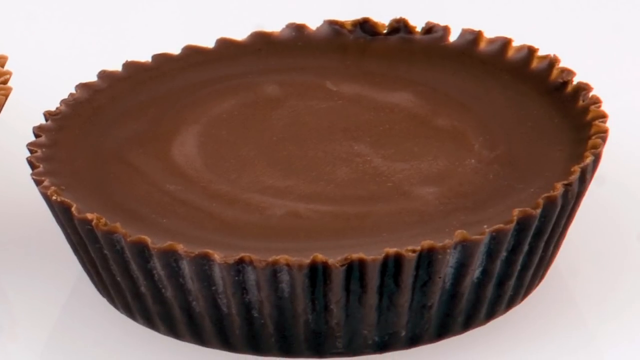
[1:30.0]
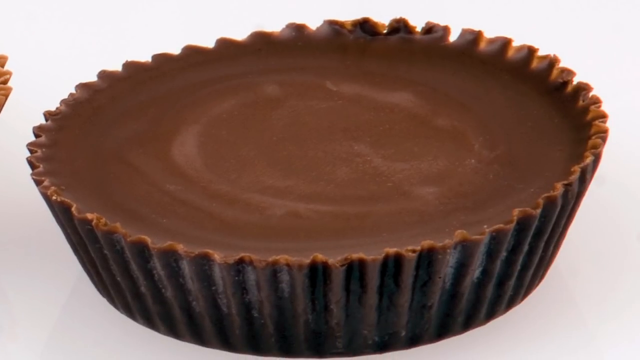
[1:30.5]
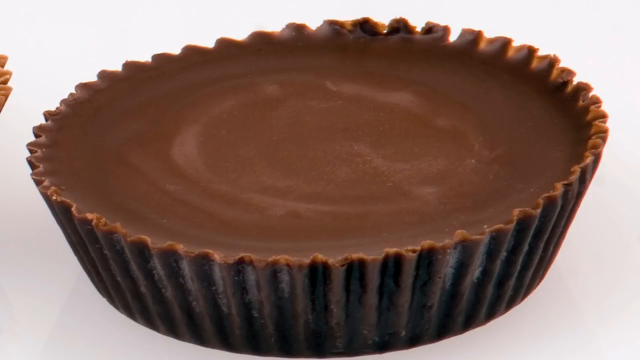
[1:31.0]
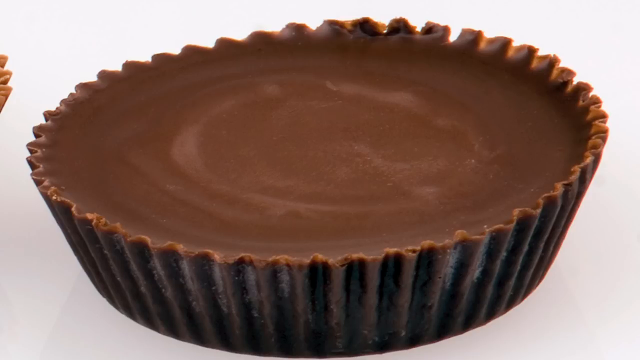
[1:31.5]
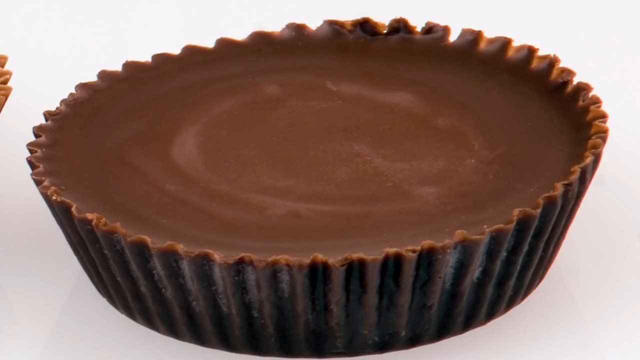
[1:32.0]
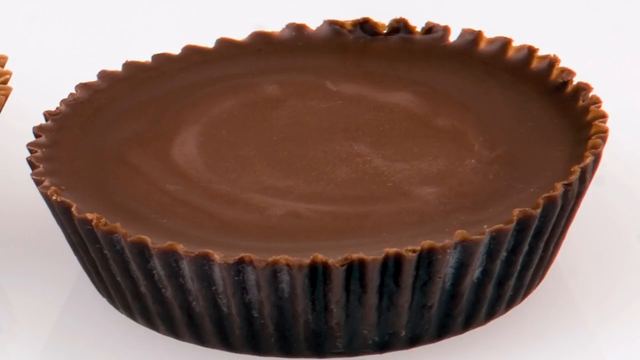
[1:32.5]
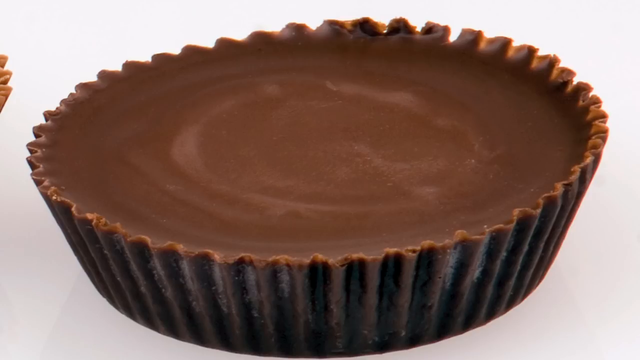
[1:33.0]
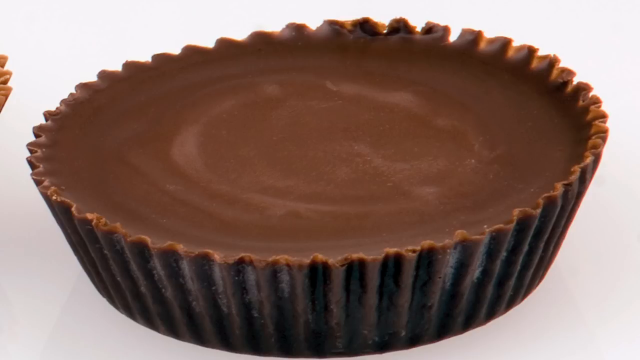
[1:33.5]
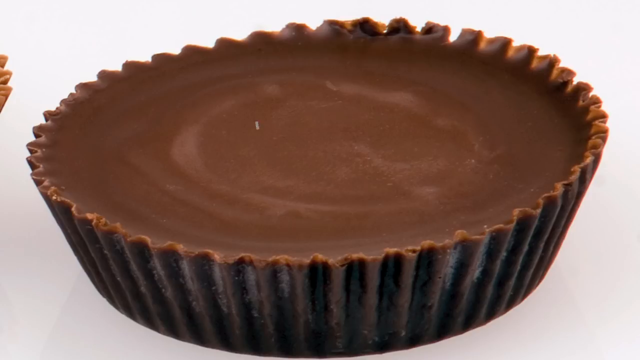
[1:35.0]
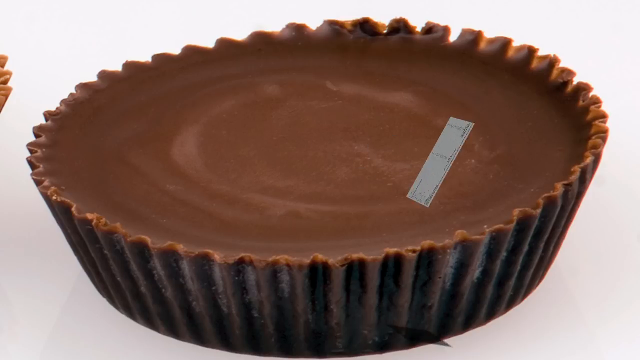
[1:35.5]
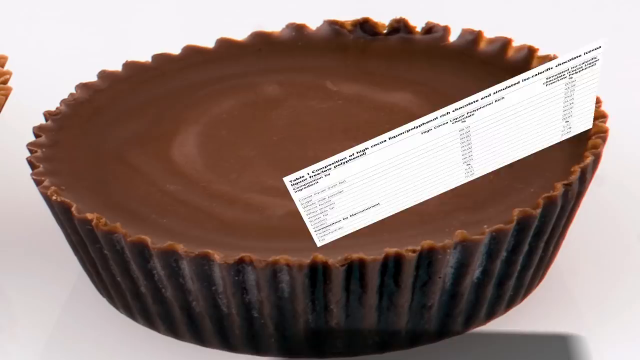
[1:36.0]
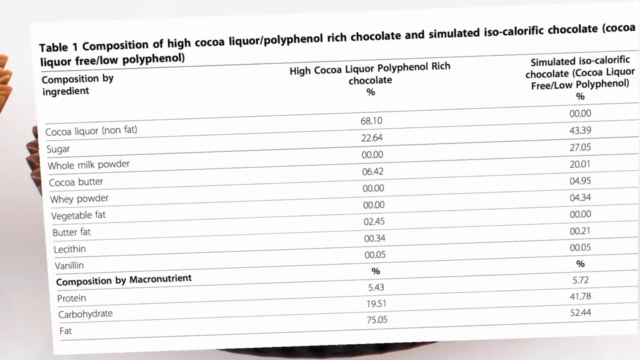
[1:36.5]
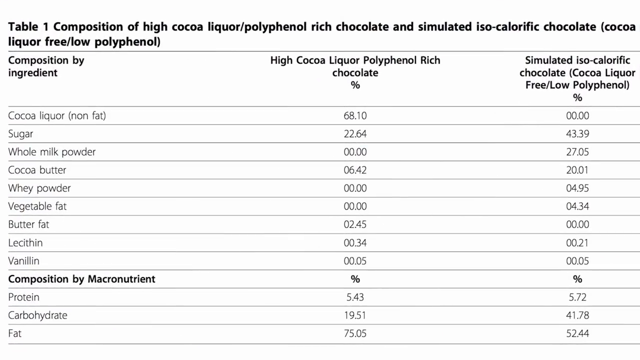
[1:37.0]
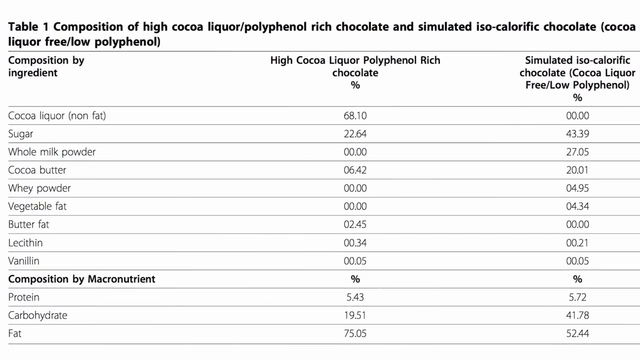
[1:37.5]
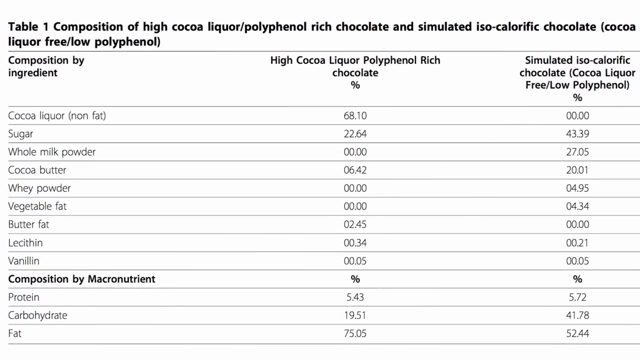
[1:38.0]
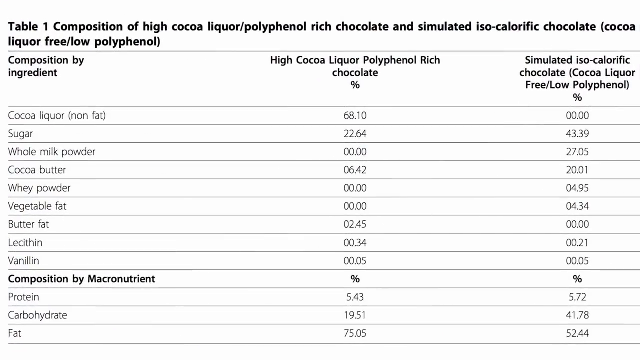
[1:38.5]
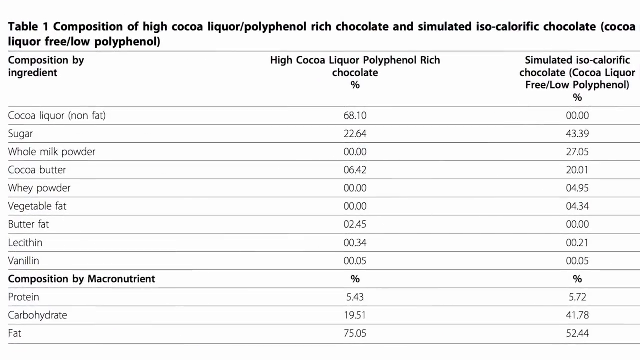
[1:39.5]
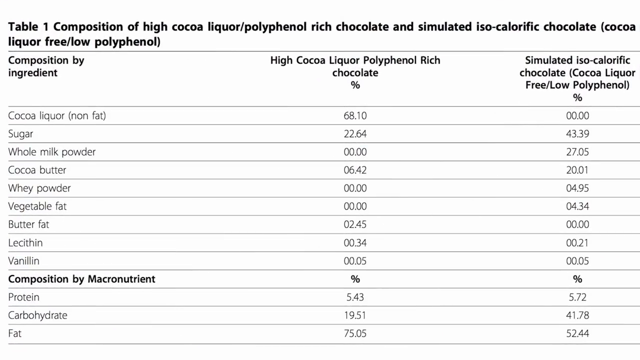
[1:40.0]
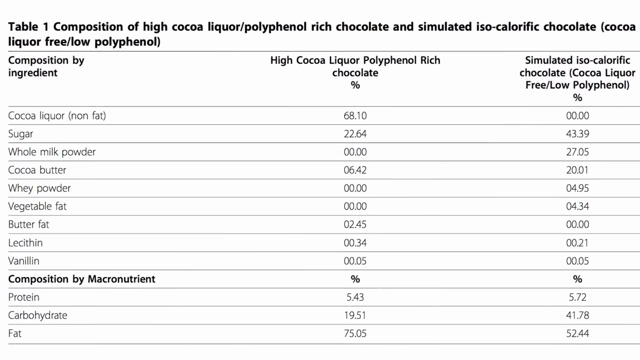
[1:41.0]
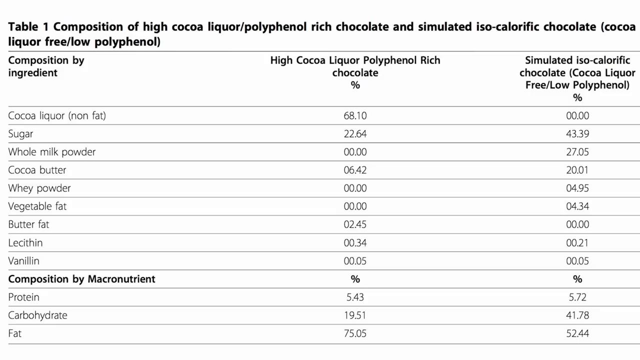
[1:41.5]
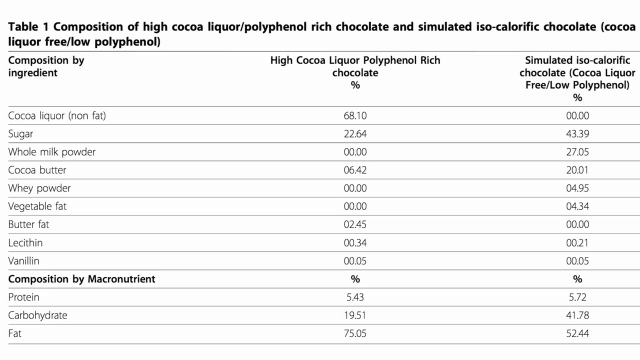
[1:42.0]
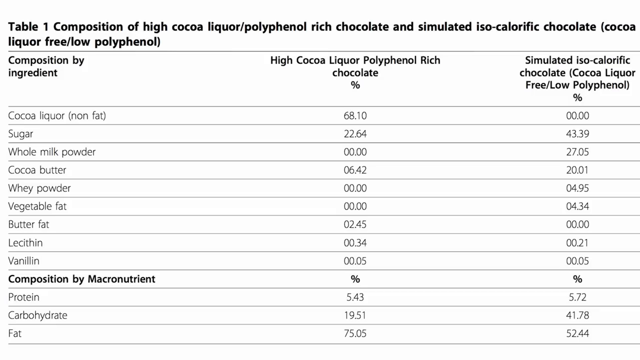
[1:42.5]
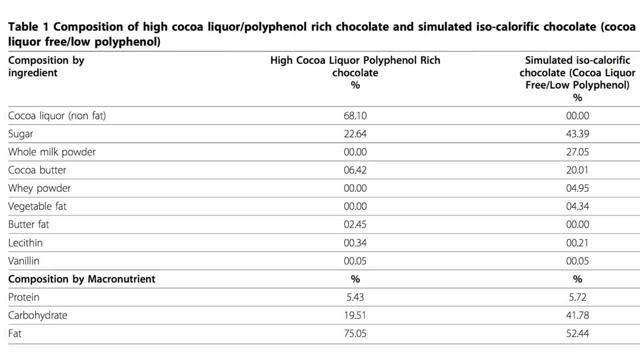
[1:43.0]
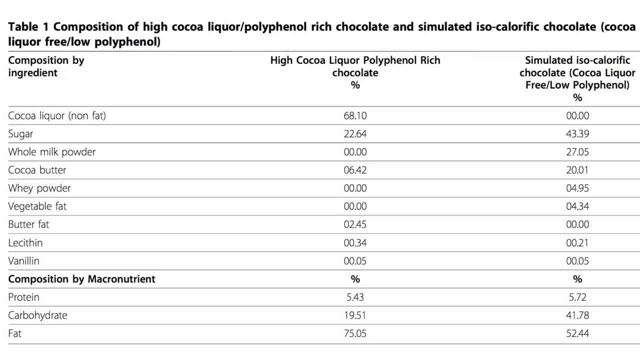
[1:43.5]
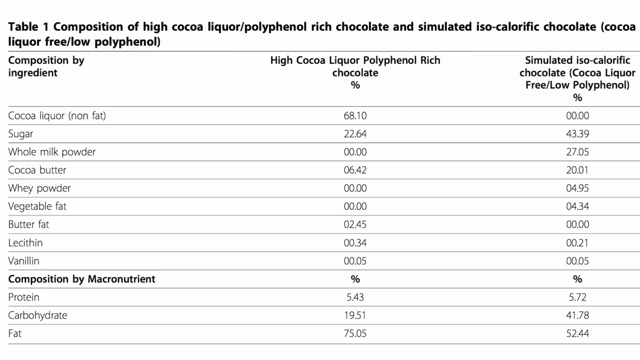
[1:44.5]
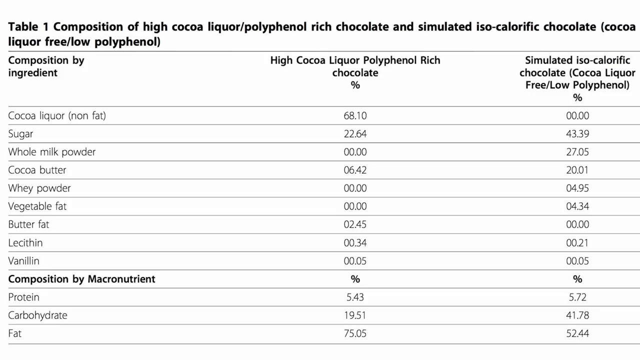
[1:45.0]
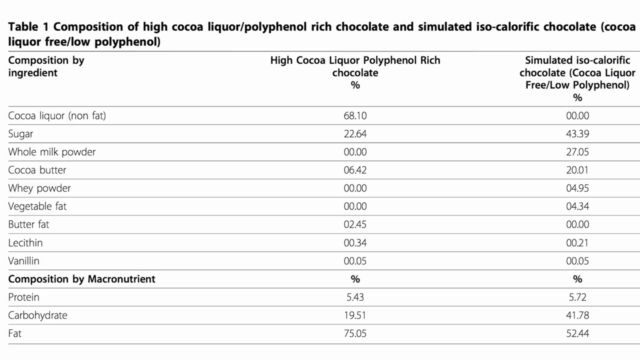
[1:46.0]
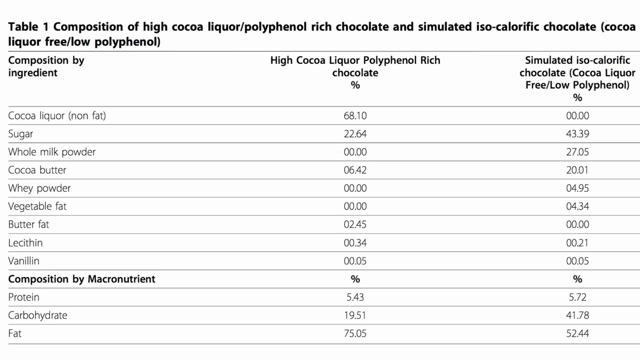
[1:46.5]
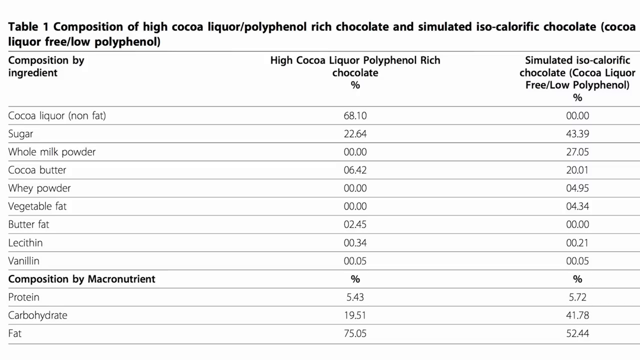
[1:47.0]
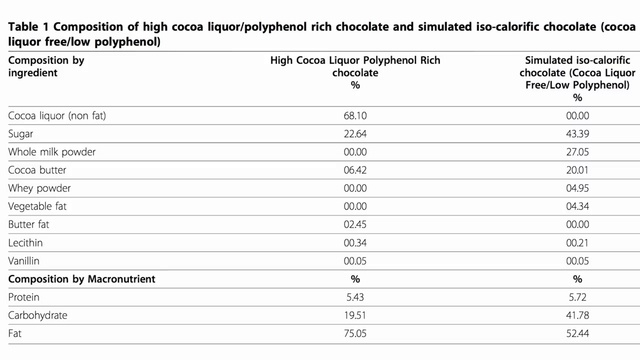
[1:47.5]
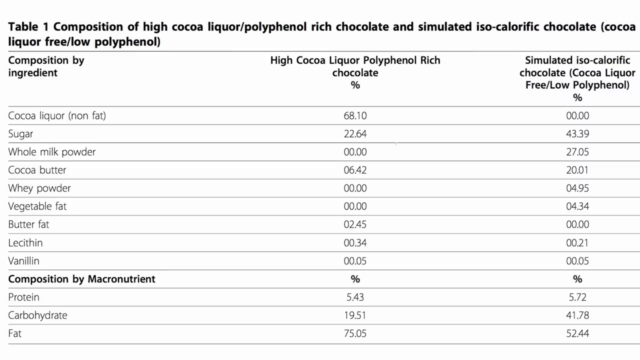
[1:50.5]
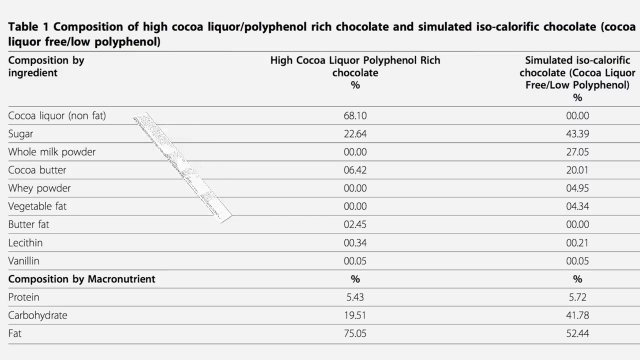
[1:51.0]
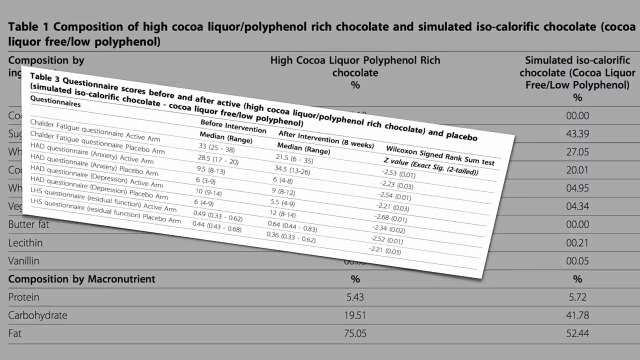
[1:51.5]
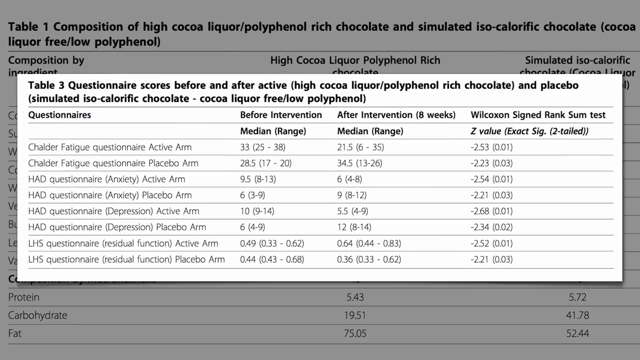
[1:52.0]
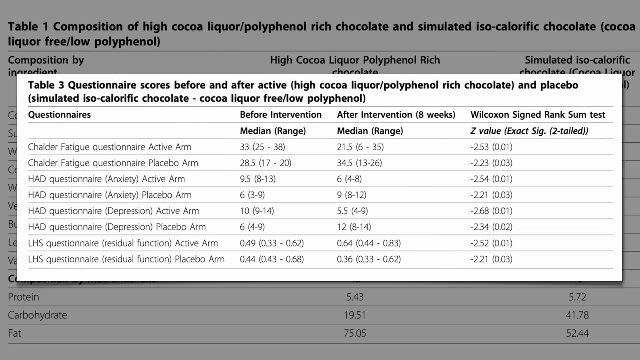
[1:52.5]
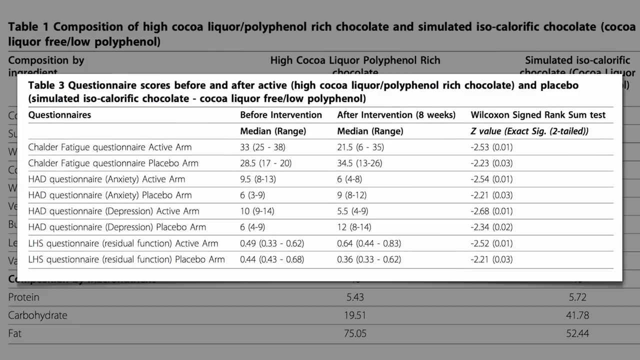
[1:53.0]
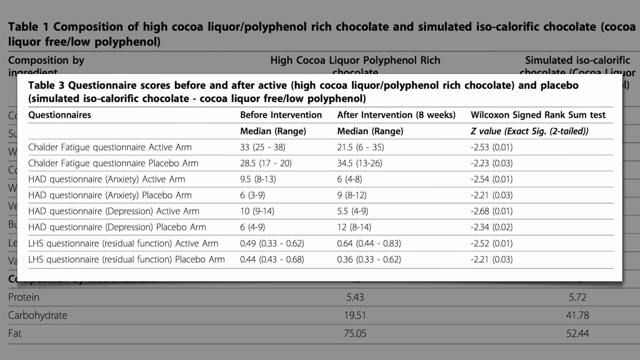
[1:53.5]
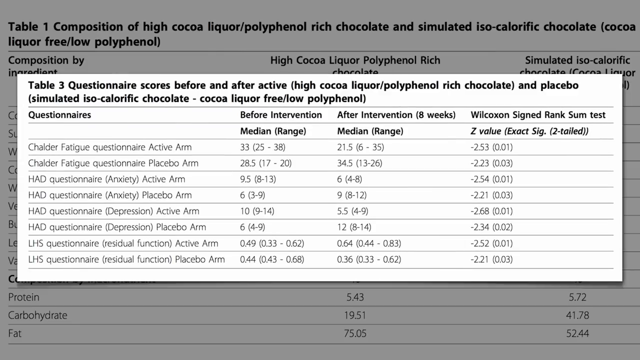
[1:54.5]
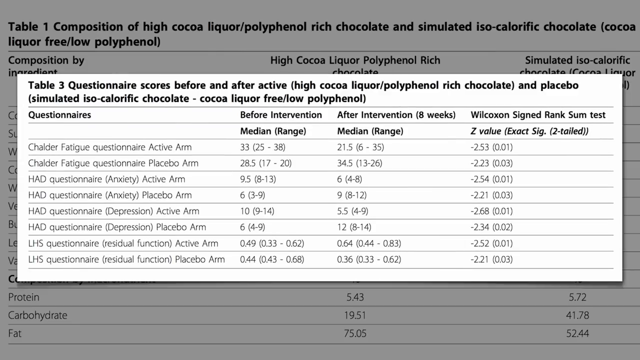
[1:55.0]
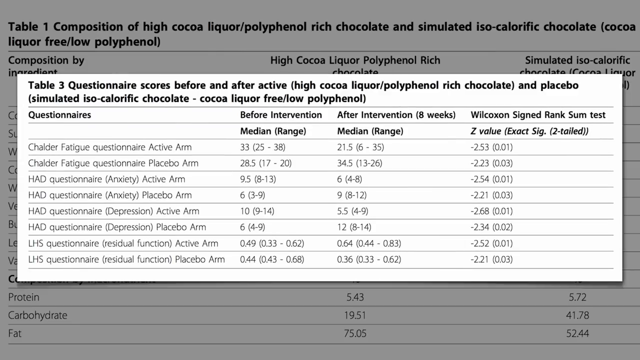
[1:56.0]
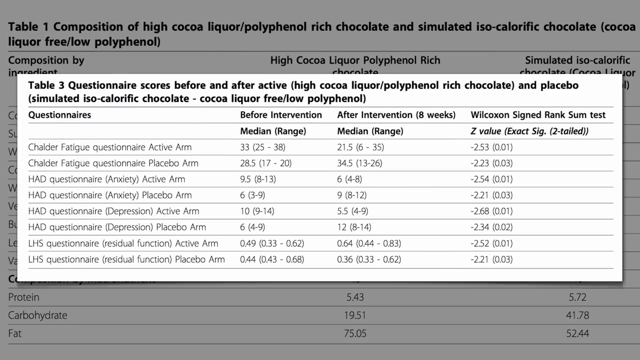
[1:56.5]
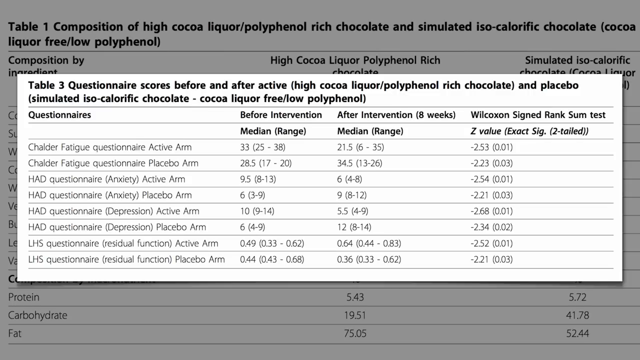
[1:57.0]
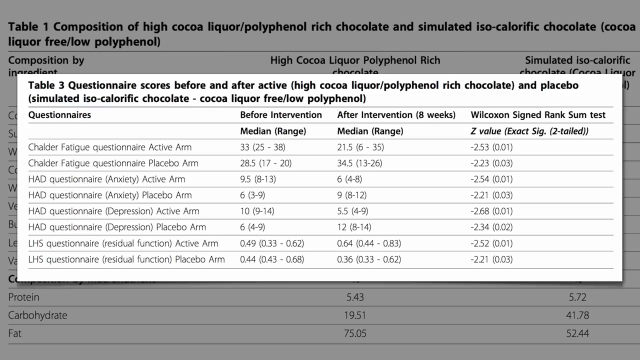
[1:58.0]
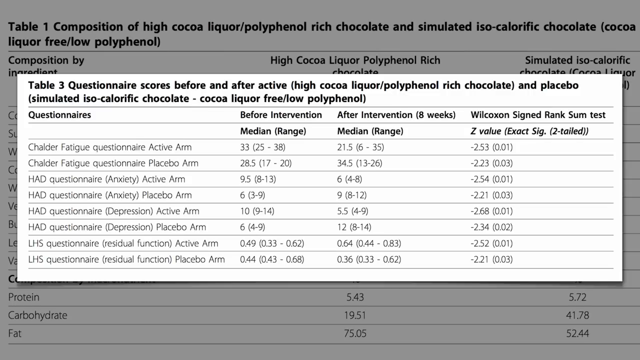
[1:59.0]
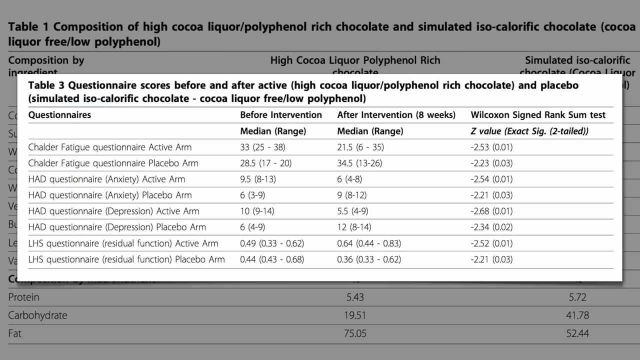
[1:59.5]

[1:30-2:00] On a white background, a dark brown chocolate or cake placed on a table is visible. Next, a screen appears with an animation like flying in from behind and fills the screen. It is a table titled "composition of high cocoa liquor or polyphenol rich chocolate and simulated iso-calorific chocolate", with three columns: "composition by ingredient", "high cocoa liquor polyphenol rich chocolate percentage" and "simulated iso-calorific chocolate percentage". The title and column headers are in black bold letters and the contents in black non-bold letters. The composition by ingredient section has rows including cocoa liquor, sugar, whole milk powder, cocoa butter, whey powder, vegetable fat, butter fat, lecithin and vanillin, with the second and third columns filled with numbers. Below it, a composition by macronutrient section has rows for protein, carbohydrate and fat. The table is on a white background with only vertical lines visible. Another table appears on top of it with the same animation, titled "Questionnaire Scores Before and After Active and Placebo", with four columns: questionnaires, before intervention, after intervention and Wilcoxon signed rank sum test.